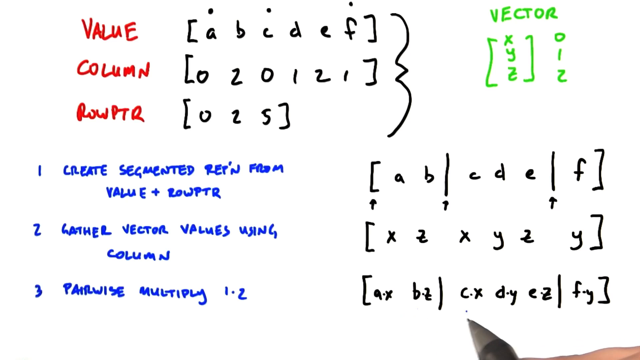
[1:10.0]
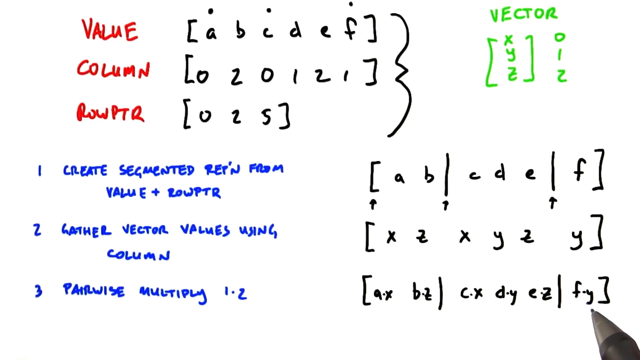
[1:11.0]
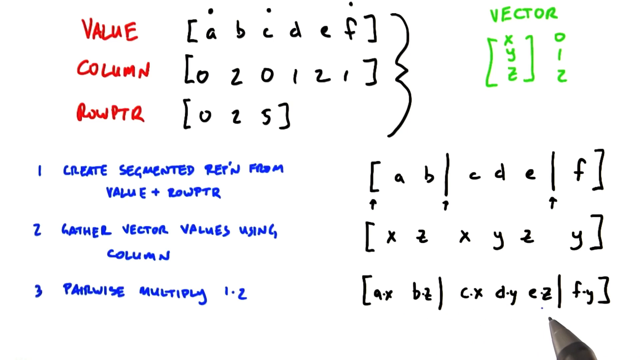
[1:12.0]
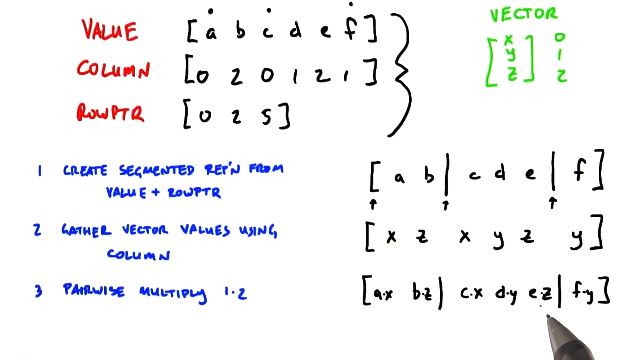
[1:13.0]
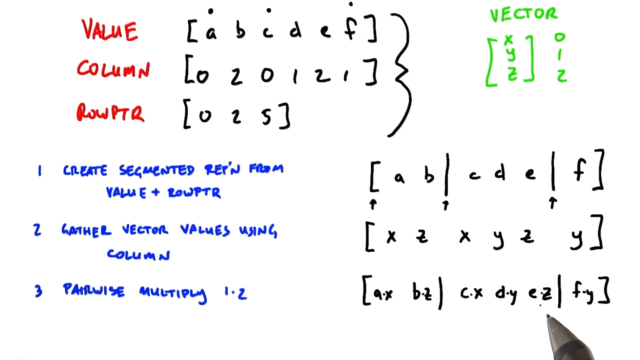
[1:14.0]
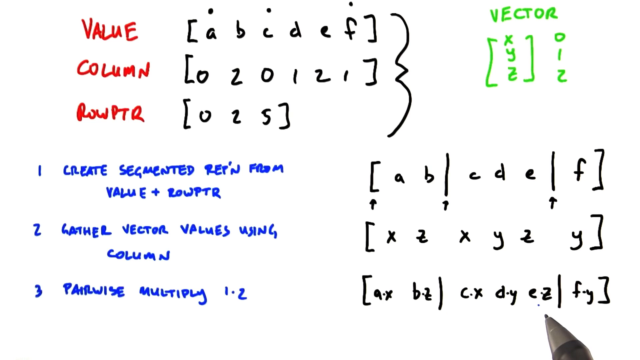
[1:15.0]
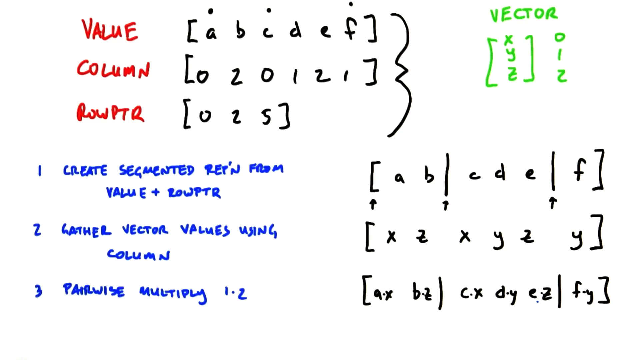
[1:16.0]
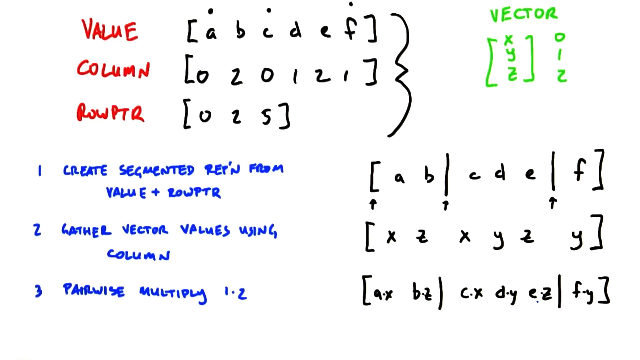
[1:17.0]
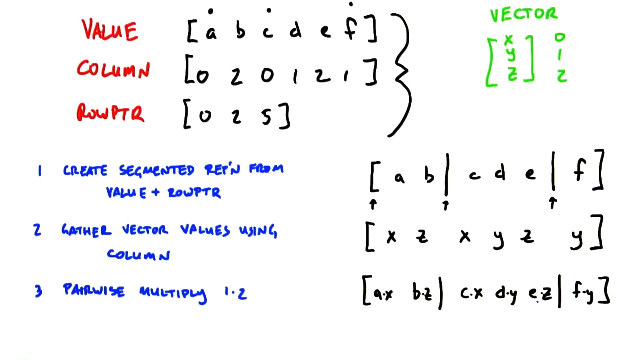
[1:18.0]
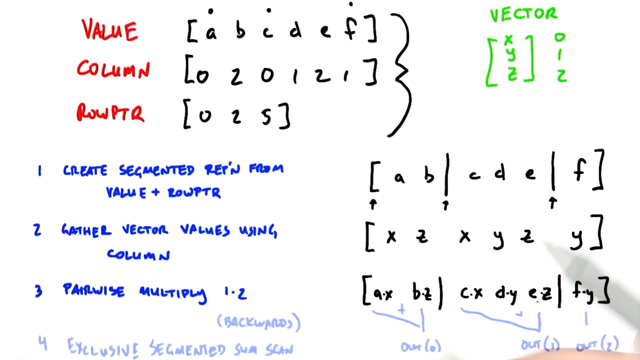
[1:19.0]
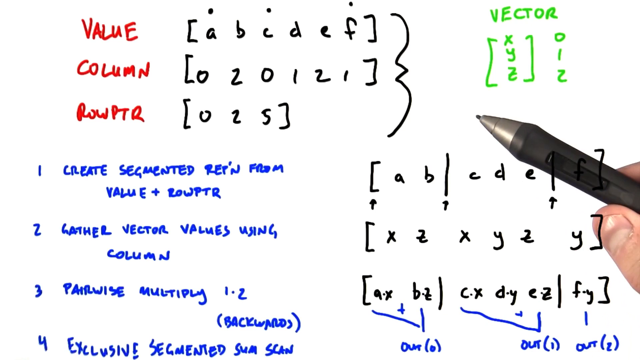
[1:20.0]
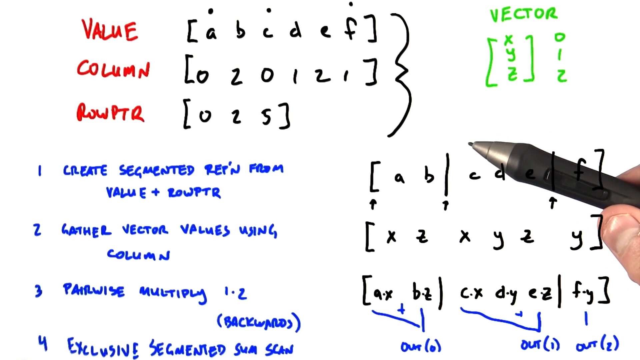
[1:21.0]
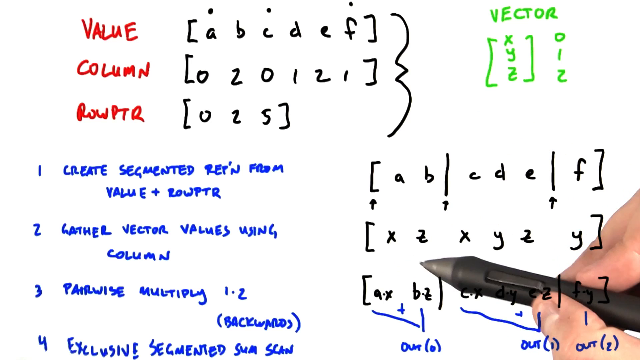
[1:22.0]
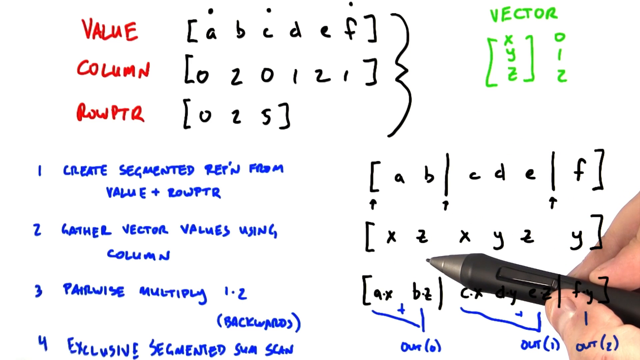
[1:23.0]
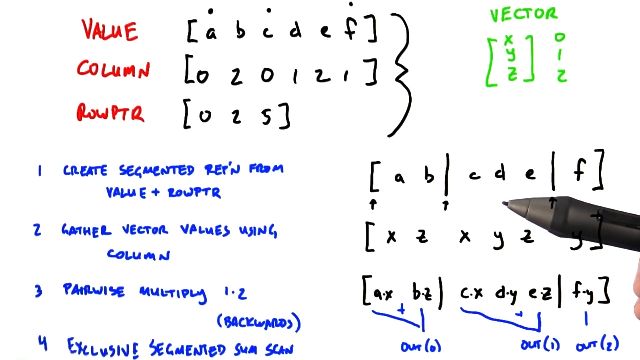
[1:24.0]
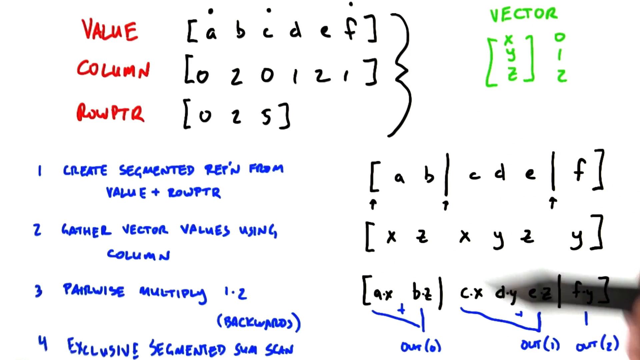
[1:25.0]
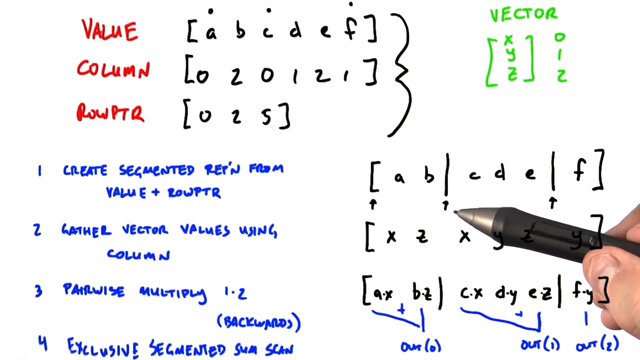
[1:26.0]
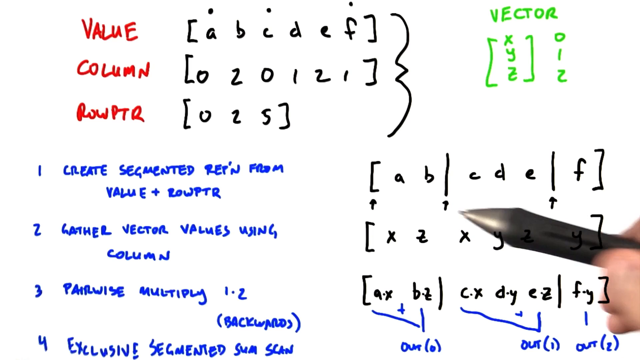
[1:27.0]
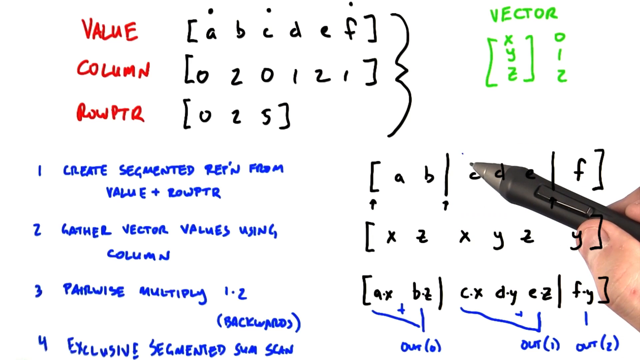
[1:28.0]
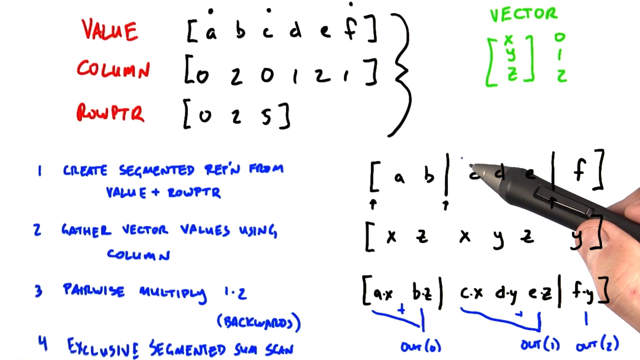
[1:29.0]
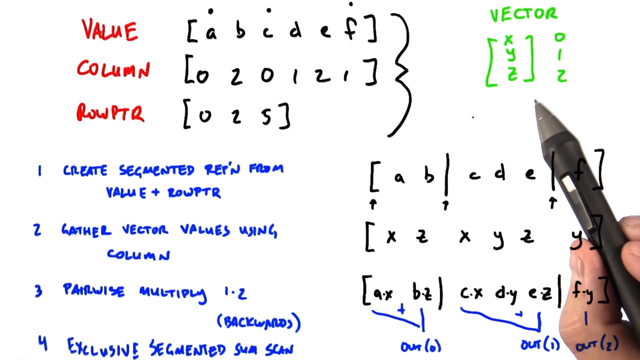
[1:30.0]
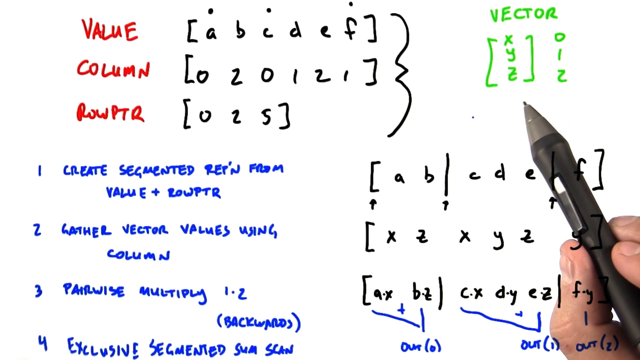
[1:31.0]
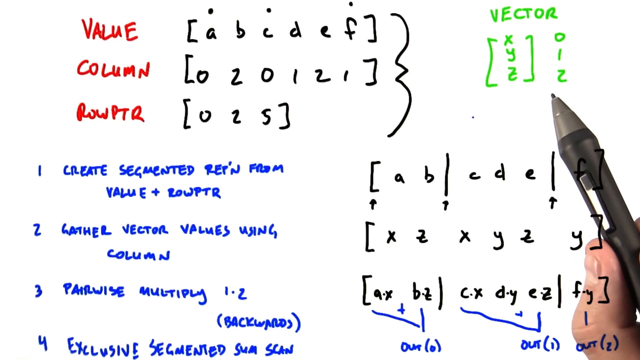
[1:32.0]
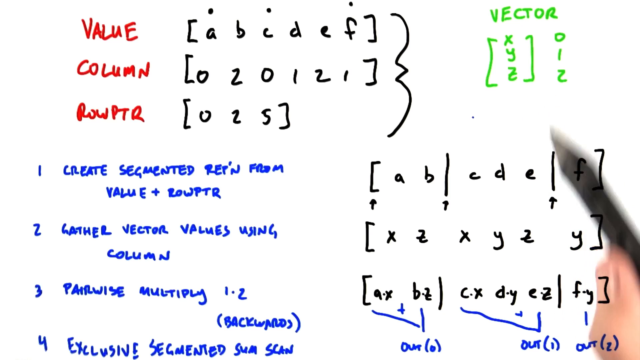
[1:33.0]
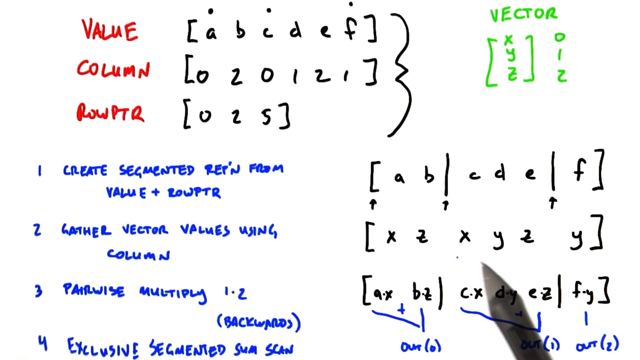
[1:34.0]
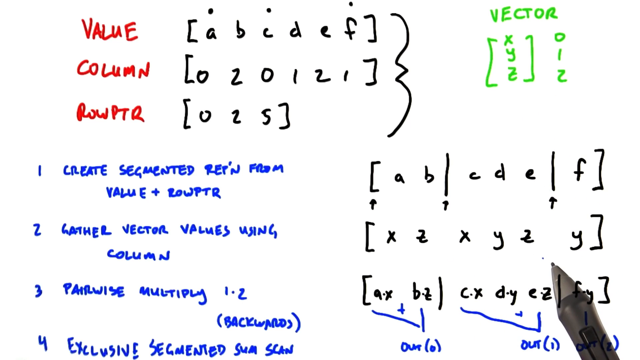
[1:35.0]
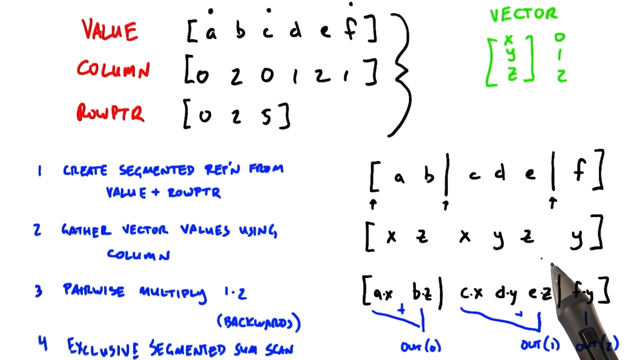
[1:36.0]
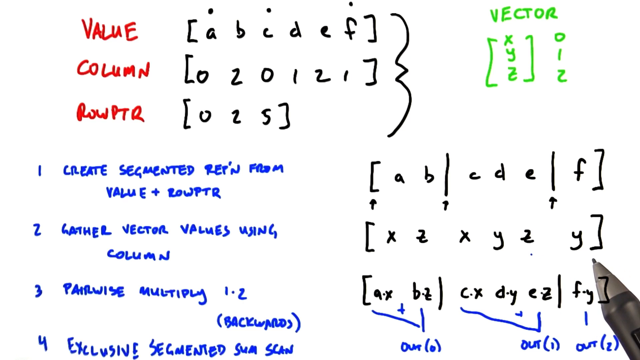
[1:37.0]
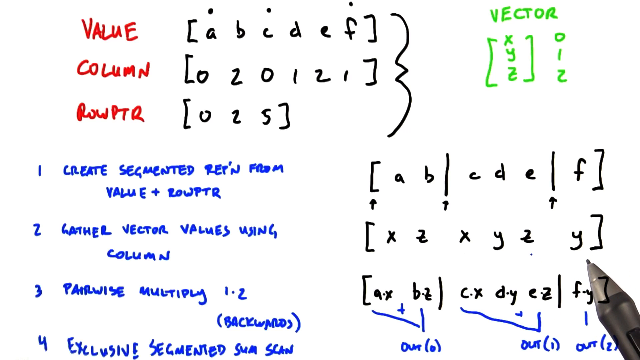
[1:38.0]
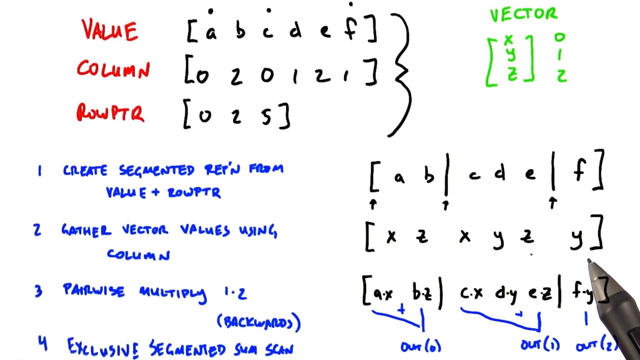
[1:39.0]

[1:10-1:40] On the left side of the screen are the labels Value, Column, and ROWPTR, written in red, each with an equation next to it written in brackets and parentheses. To the right is the word Vector in green; directly underneath it, in brackets, are the letters X, Y, Z, with the numbers 0, 1, and 2 next to them. Beneath both are three steps written in blue, each with an equation next to it written with brackets, segmented lines, and multiplication symbols. The pen gestures toward the equation in step 3, drawing lines and symbols in blue. The hand then moves the pen to step 2 and step 1, pointing at different areas of the equations, and also points at the Vector label.